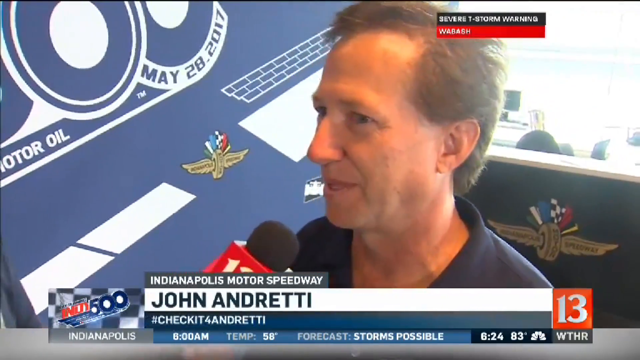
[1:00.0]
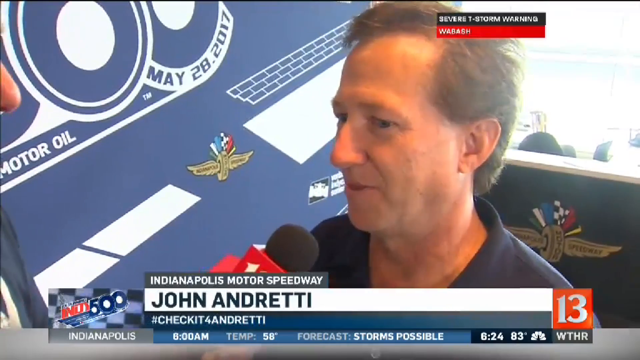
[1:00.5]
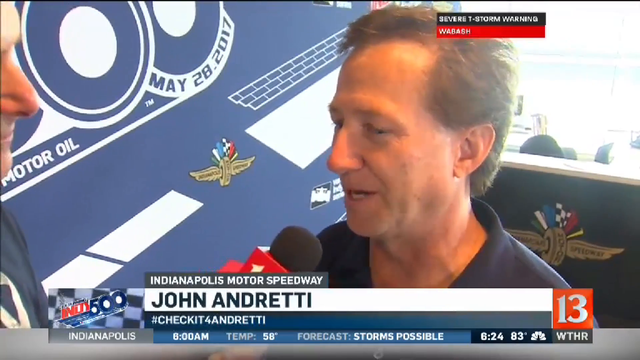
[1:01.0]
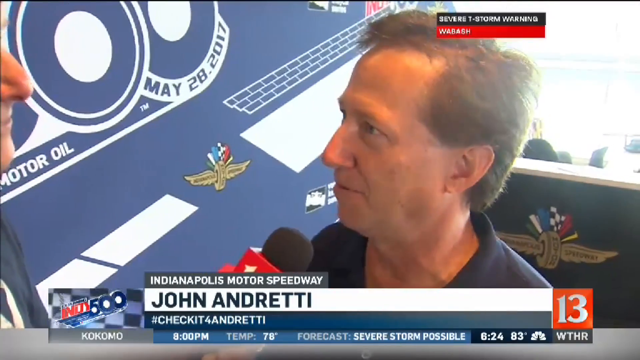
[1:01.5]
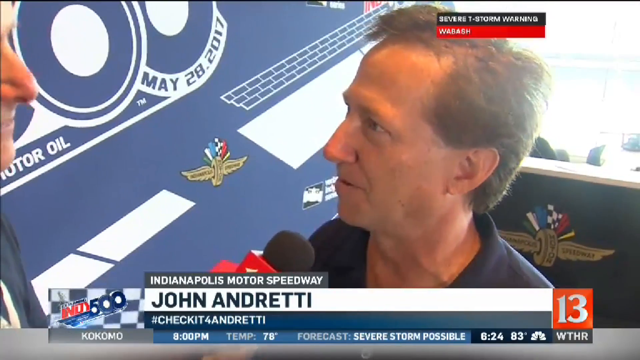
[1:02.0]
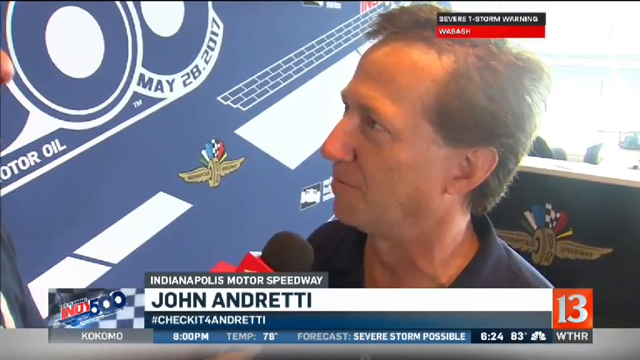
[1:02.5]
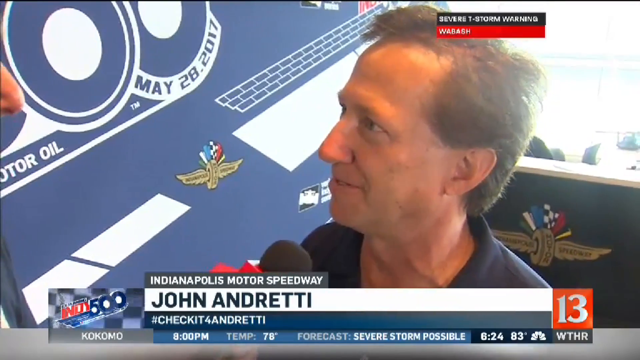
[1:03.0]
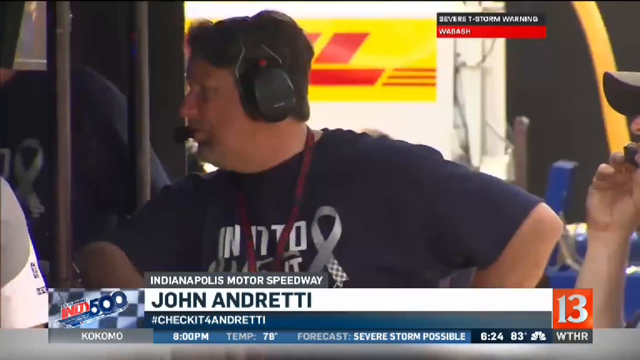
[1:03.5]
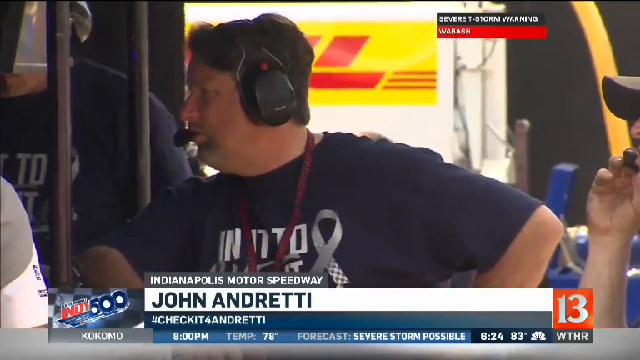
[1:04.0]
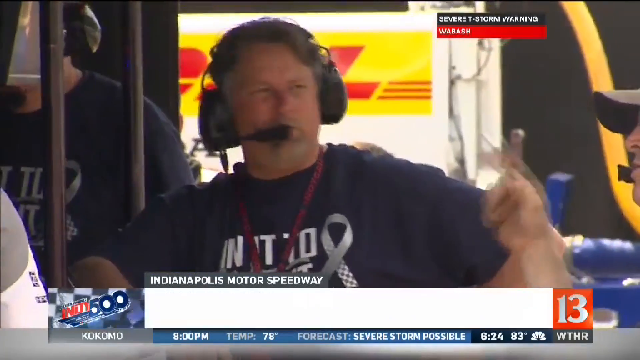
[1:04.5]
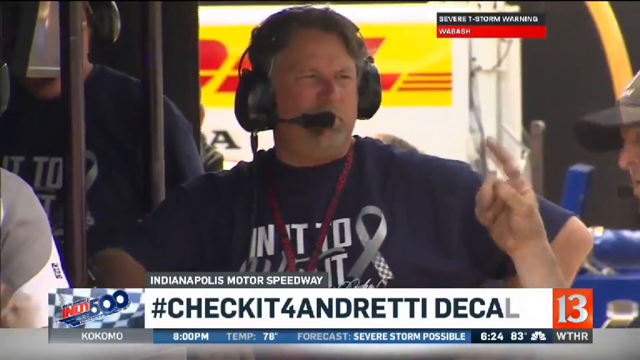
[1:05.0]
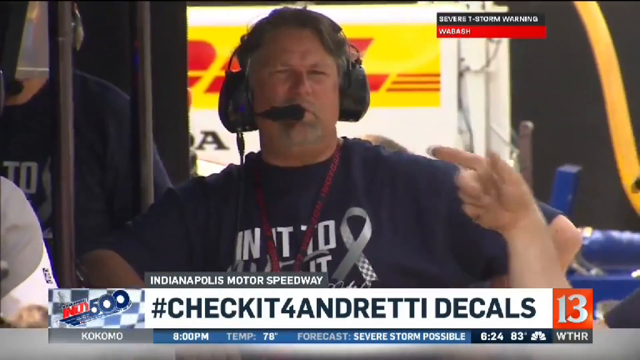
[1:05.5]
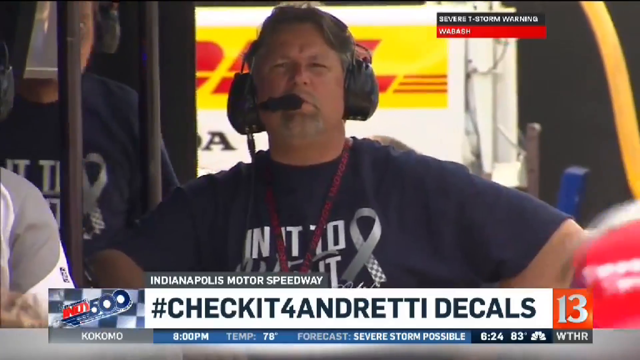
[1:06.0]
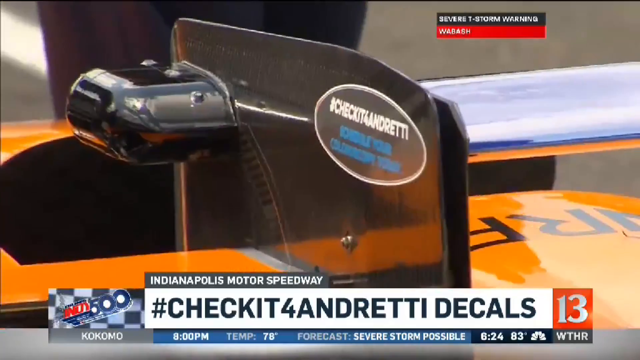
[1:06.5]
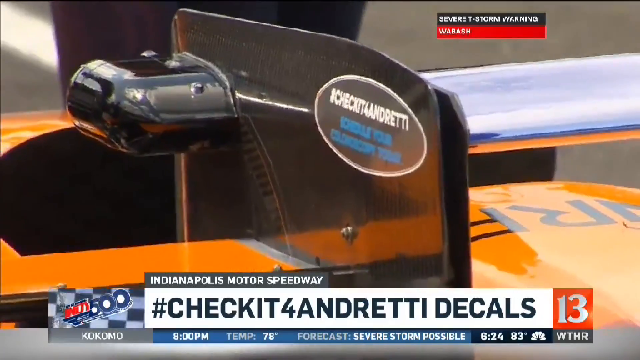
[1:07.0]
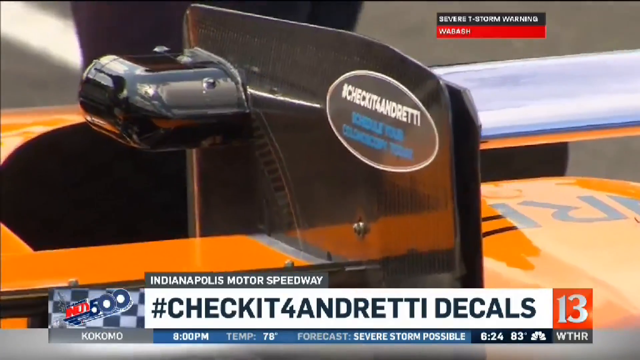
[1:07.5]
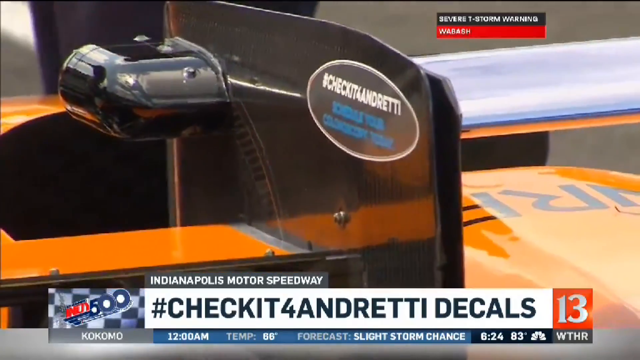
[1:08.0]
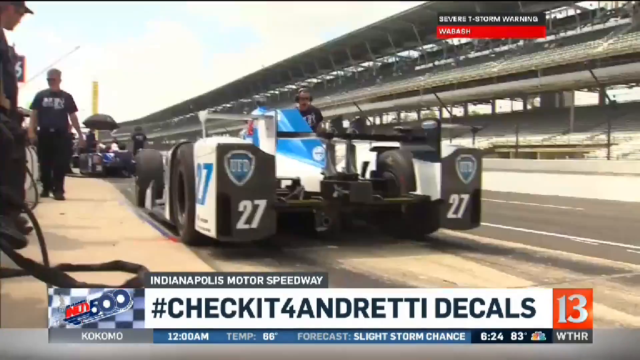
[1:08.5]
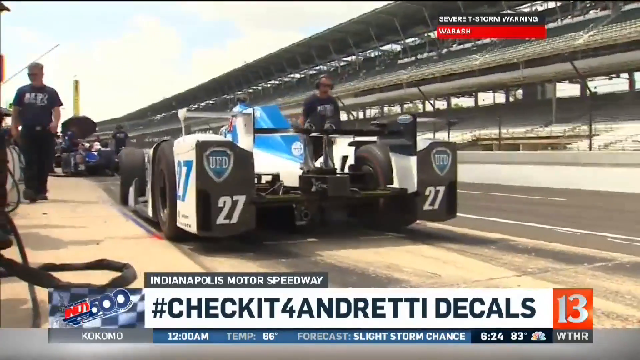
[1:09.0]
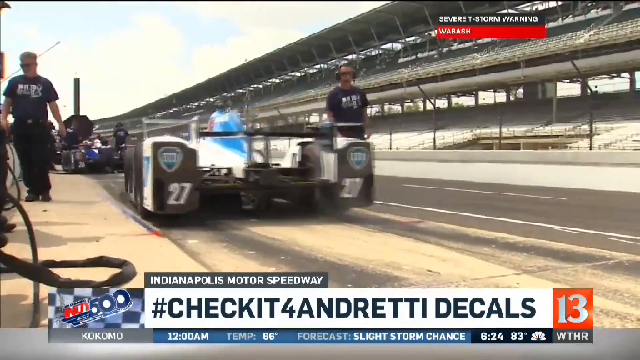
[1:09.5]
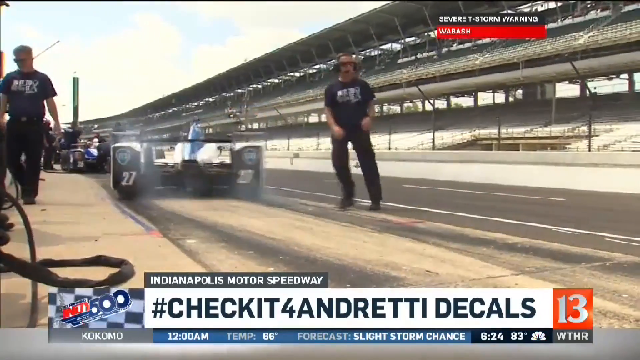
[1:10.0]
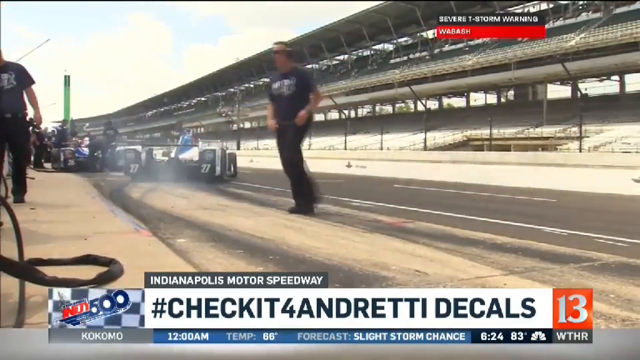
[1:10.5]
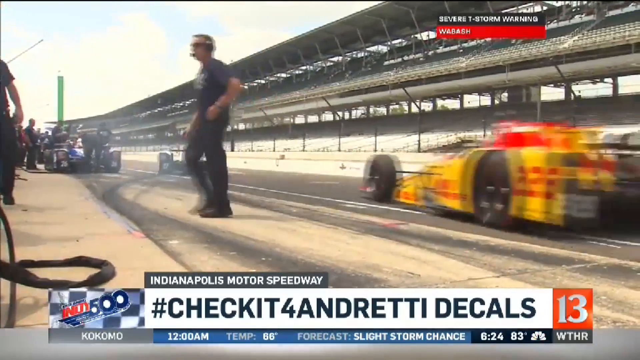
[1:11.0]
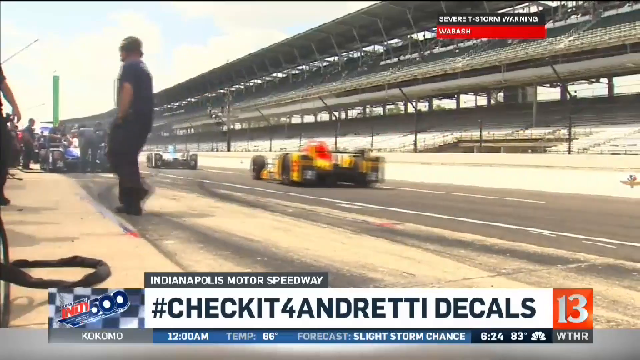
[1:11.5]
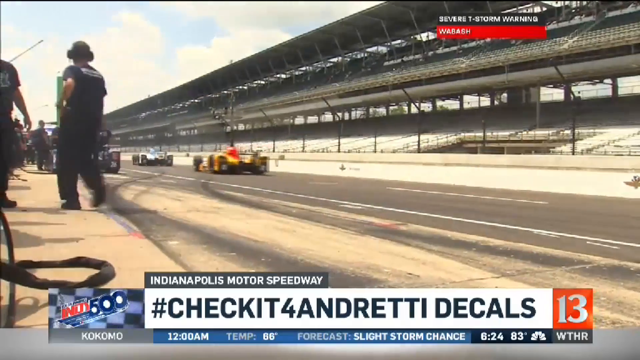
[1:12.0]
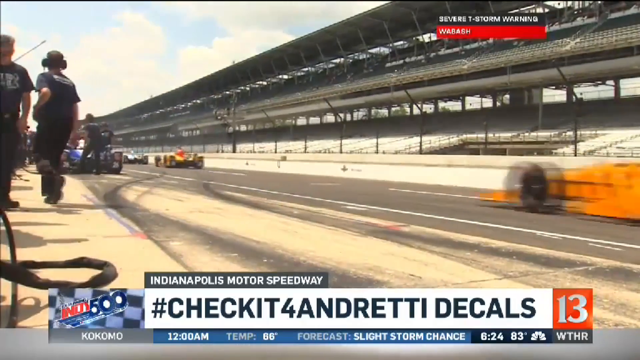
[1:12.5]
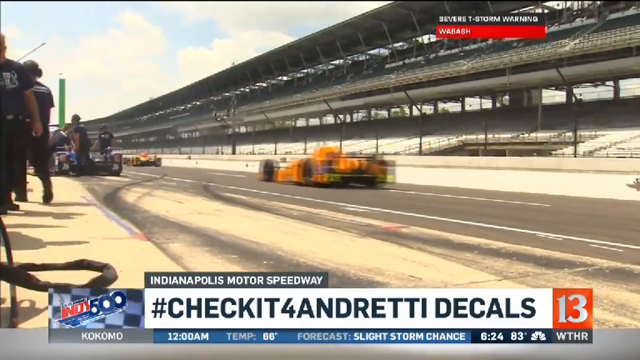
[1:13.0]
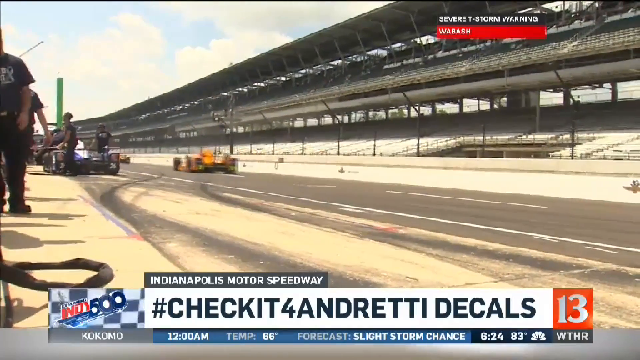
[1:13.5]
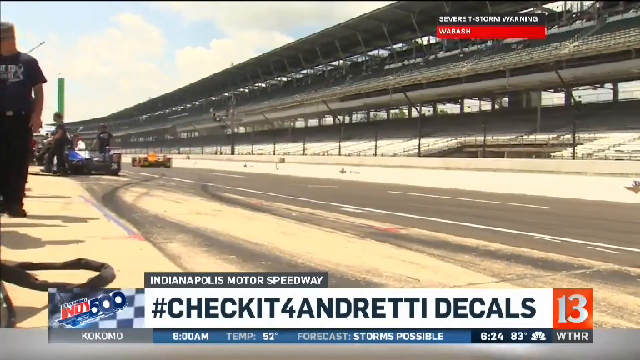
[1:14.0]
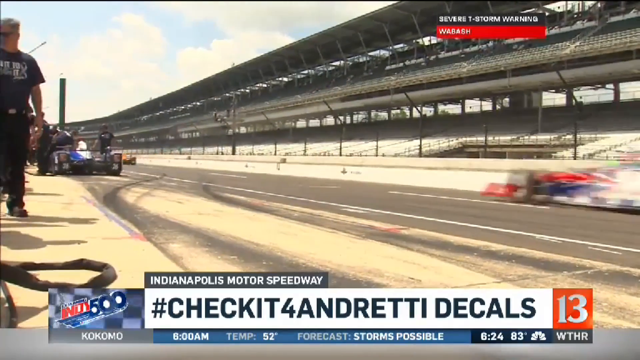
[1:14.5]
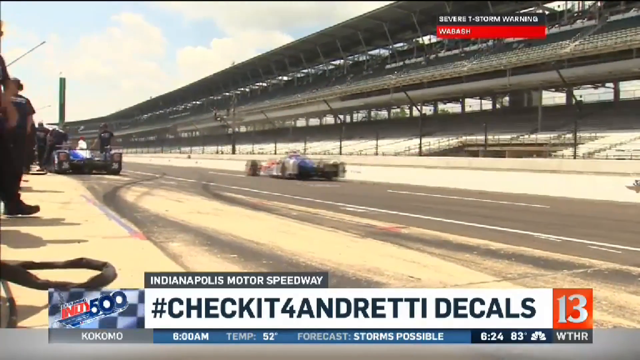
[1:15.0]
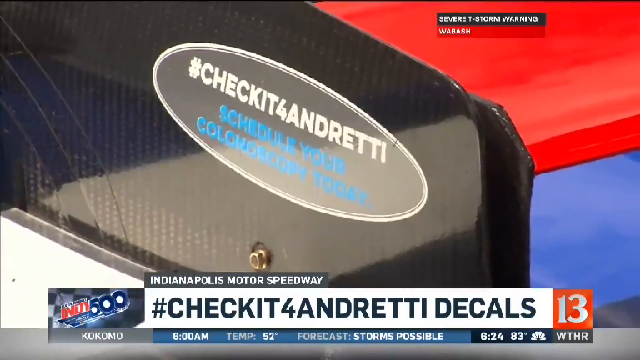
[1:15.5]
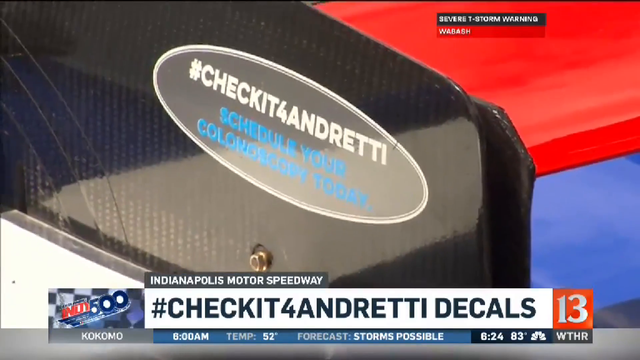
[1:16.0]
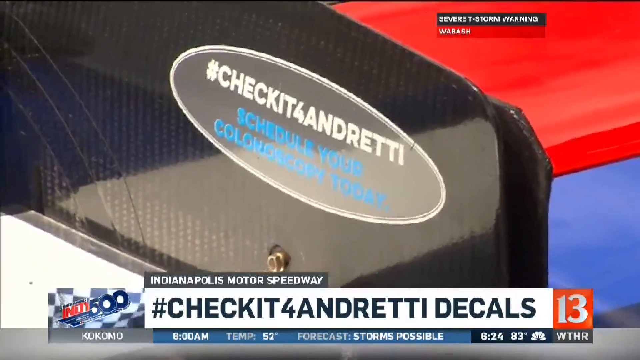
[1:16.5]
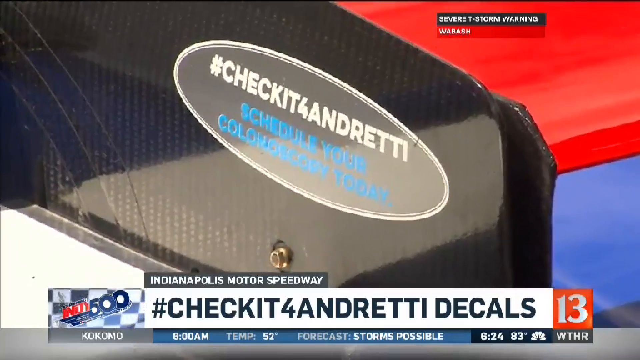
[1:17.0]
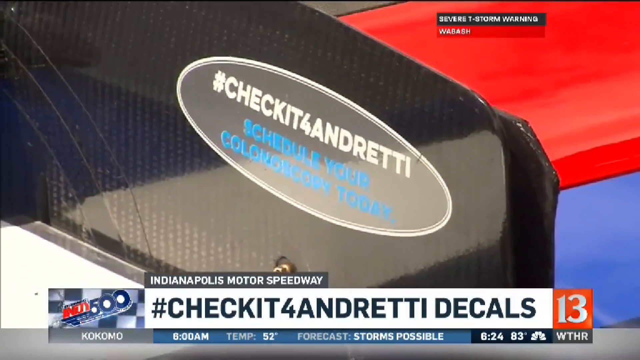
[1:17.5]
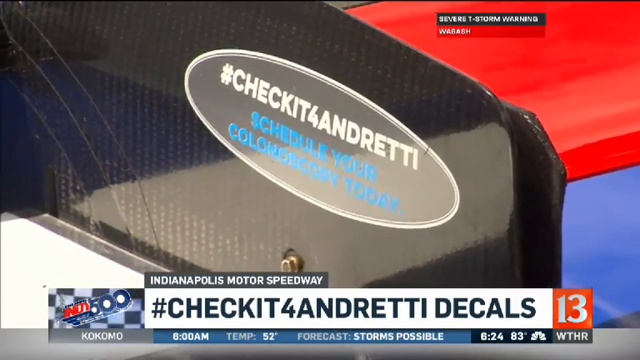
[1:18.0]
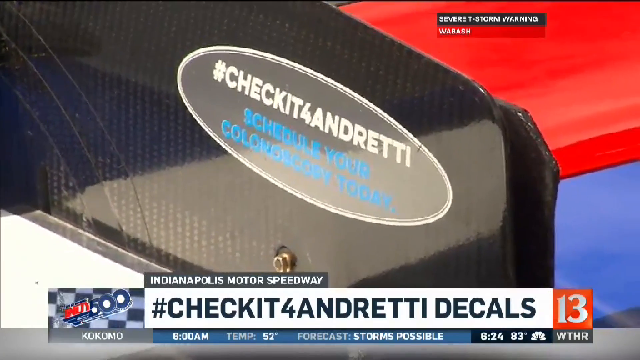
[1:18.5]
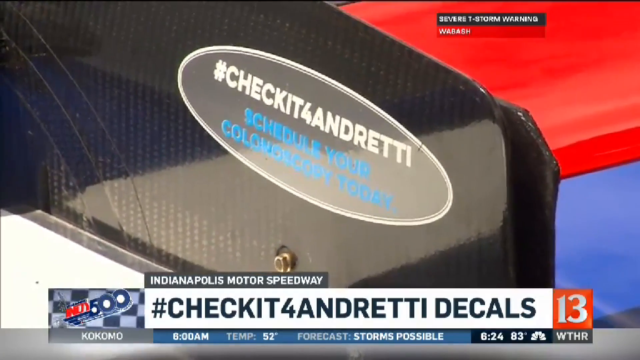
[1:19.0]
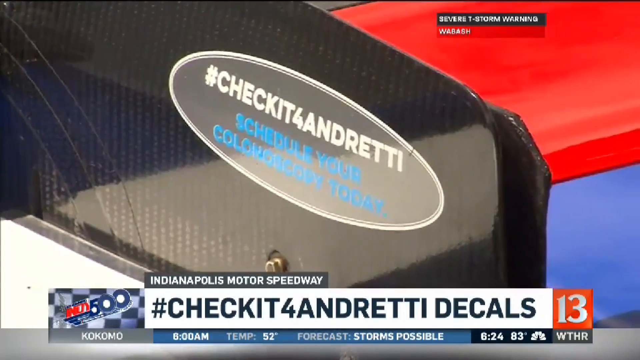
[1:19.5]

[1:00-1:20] John Andretti is interviewed at the Indianapolis Motor Speedway, with "#checkit4Andretti" in the captions. He appears to be in his late 50s and wears a dark blue shirt while speaking into a black microphone with a red square on it, held by the reporter. After the interview, what seem to be members of Andretti's team are shown wearing headphones with microphones, as the banner says "#checkit4Andretti decals". More footage shows Andretti's car with "#checkit4Andretti" on it, accelerating and going onto the racetrack, and the shot ends on an up-close view of the #checkit4Andretti sticker on the car, which says "schedule your" followed by two unreadable words in light blue.